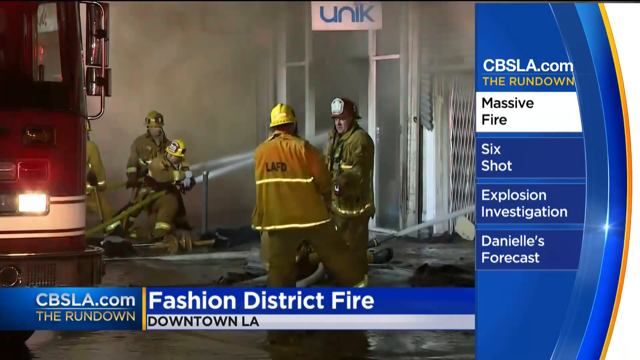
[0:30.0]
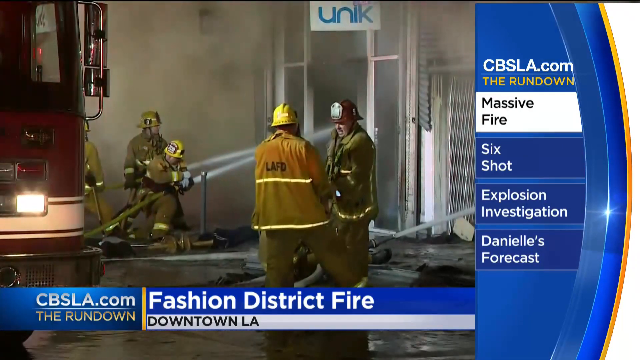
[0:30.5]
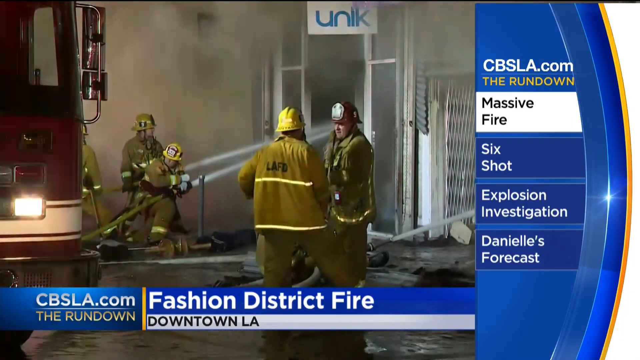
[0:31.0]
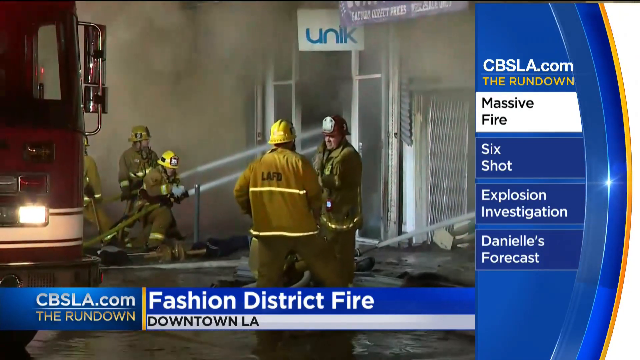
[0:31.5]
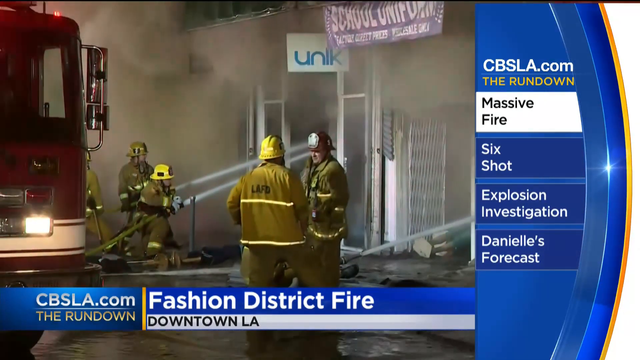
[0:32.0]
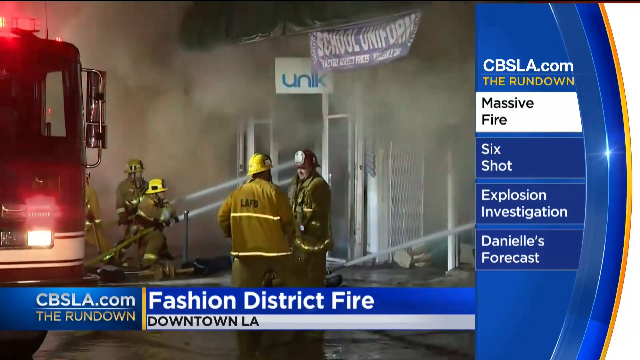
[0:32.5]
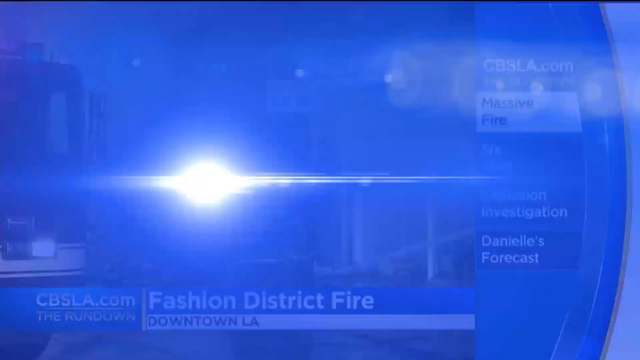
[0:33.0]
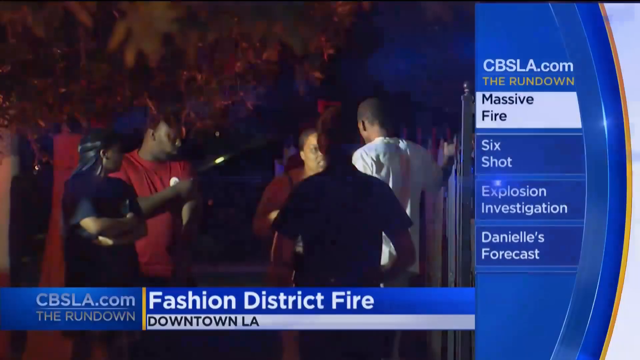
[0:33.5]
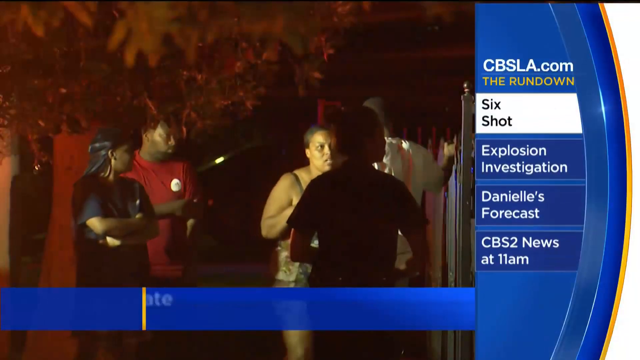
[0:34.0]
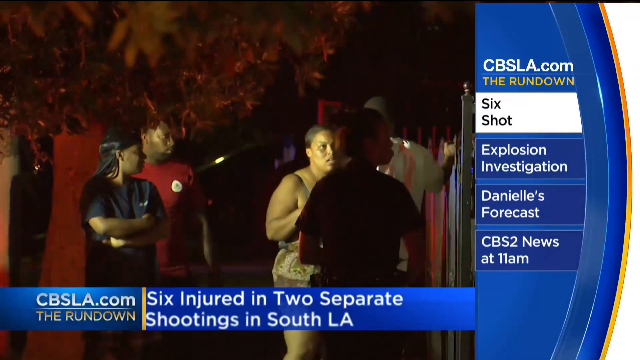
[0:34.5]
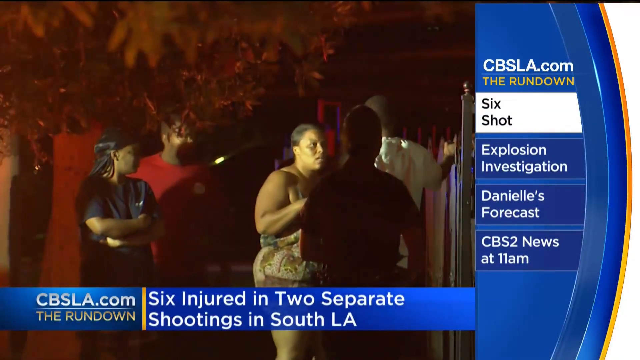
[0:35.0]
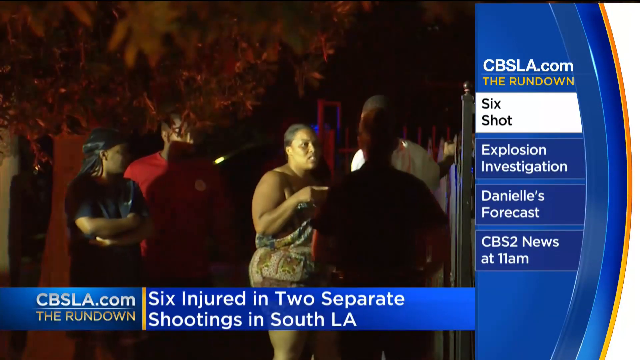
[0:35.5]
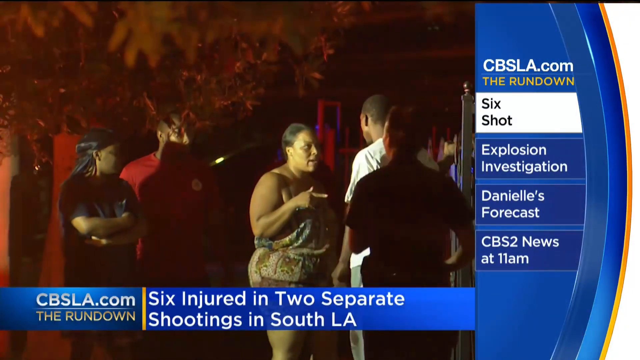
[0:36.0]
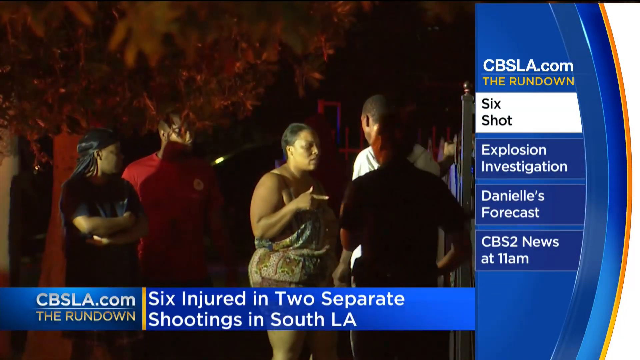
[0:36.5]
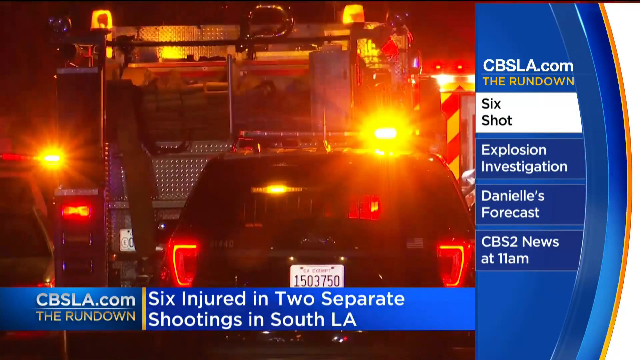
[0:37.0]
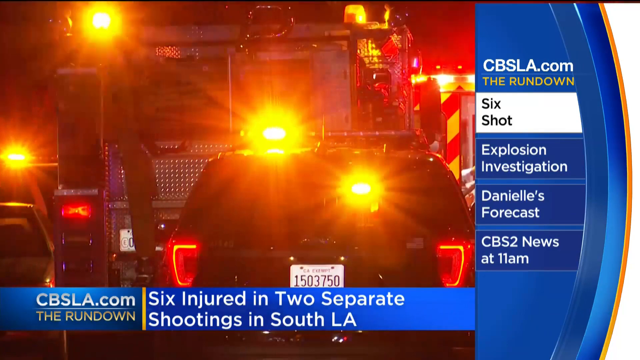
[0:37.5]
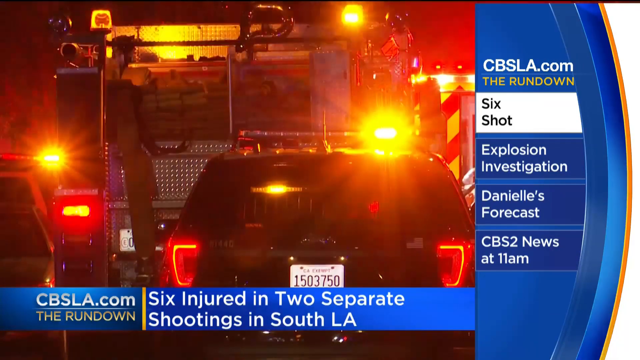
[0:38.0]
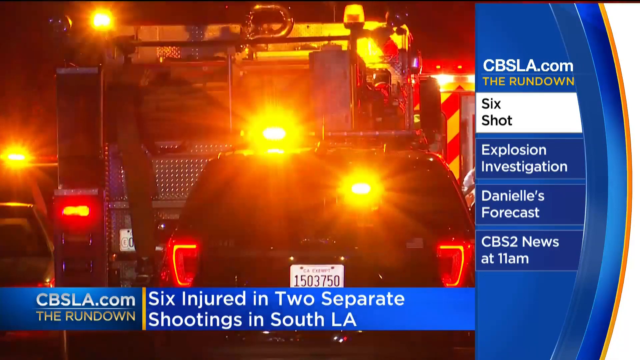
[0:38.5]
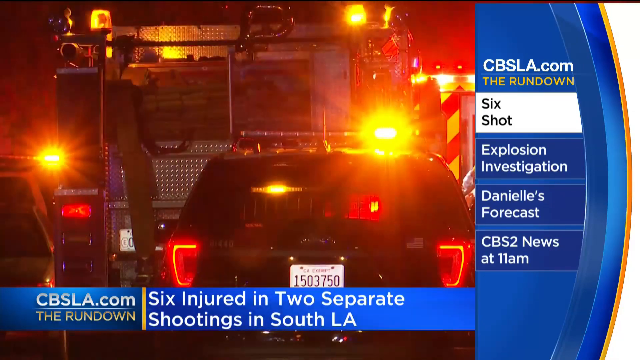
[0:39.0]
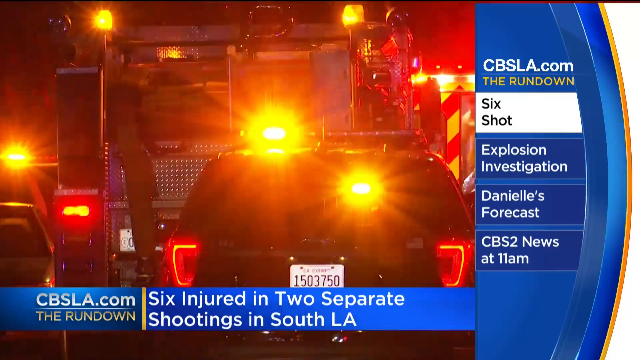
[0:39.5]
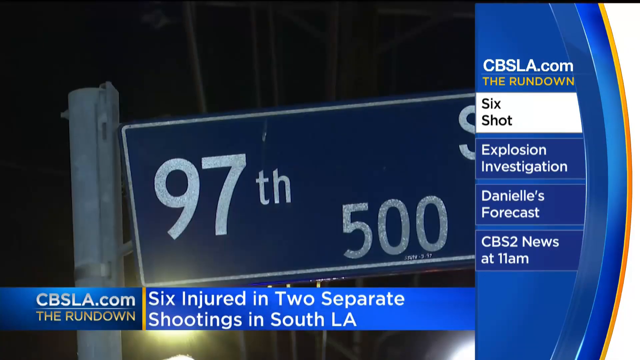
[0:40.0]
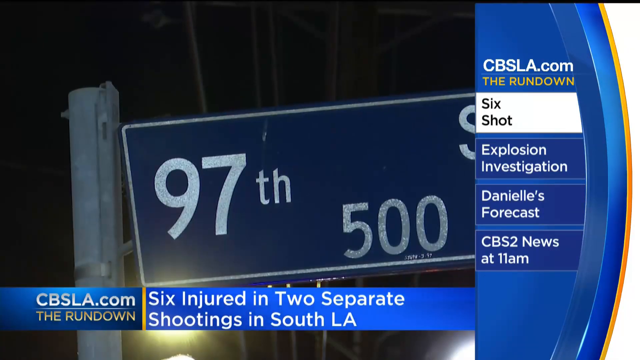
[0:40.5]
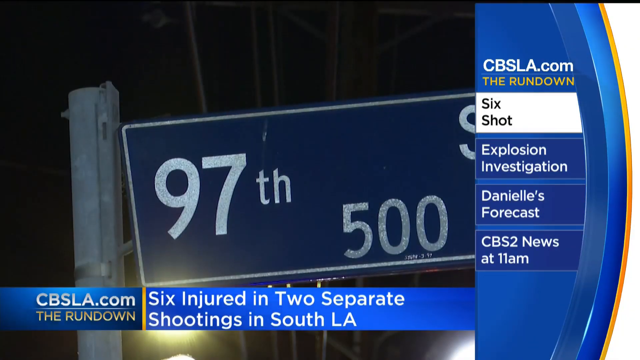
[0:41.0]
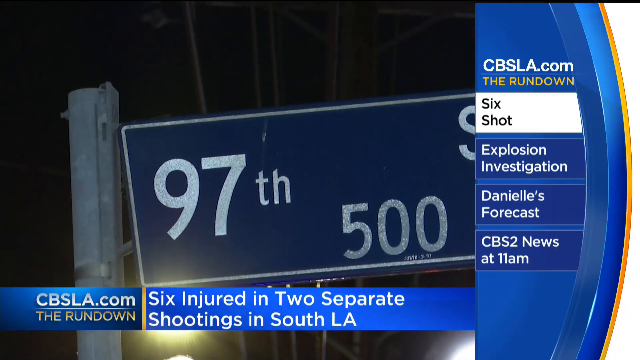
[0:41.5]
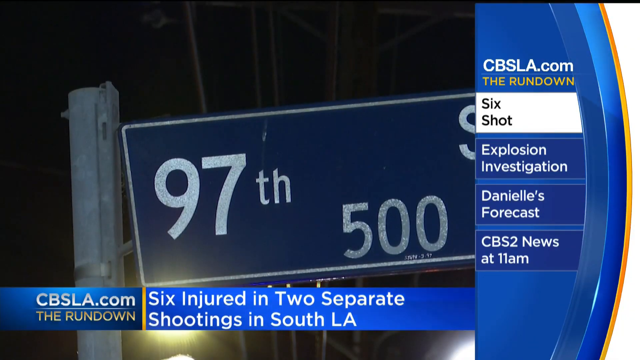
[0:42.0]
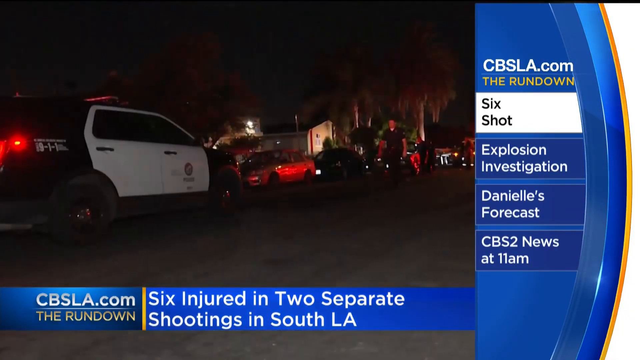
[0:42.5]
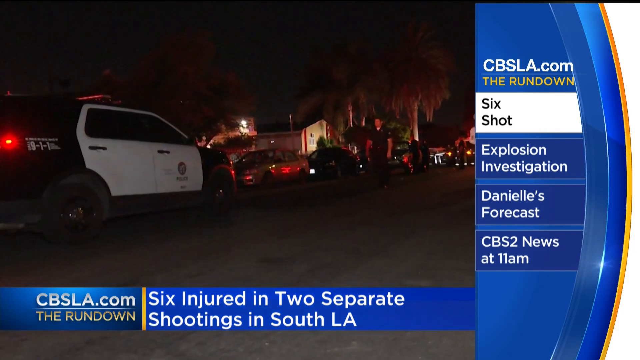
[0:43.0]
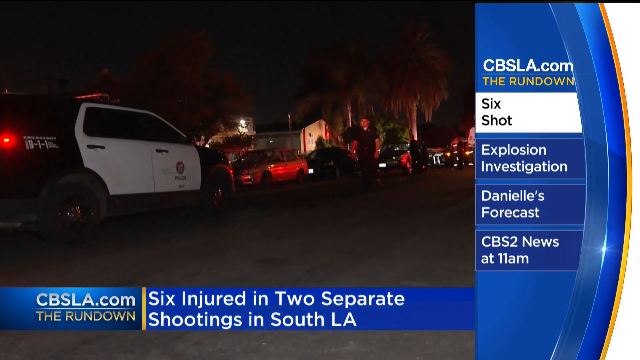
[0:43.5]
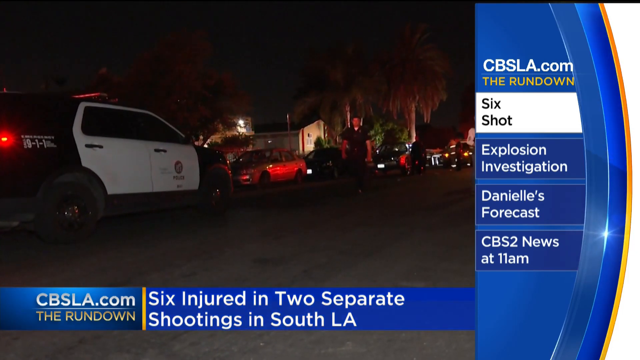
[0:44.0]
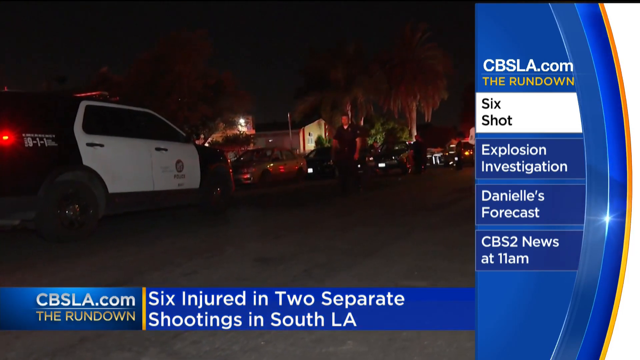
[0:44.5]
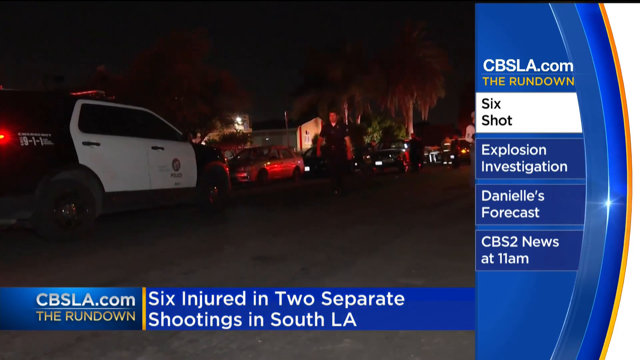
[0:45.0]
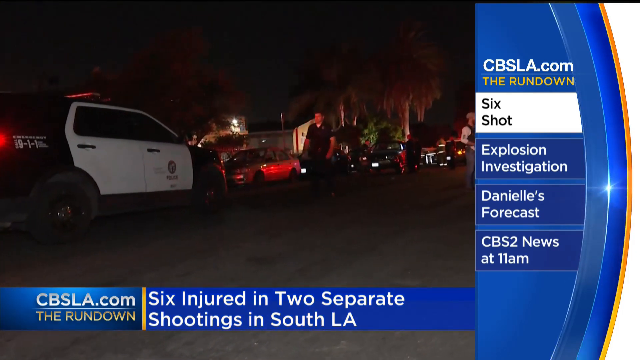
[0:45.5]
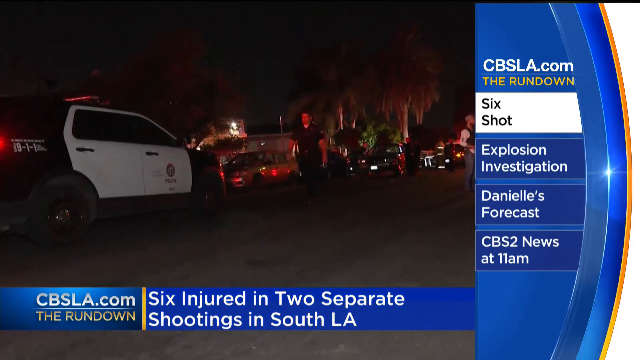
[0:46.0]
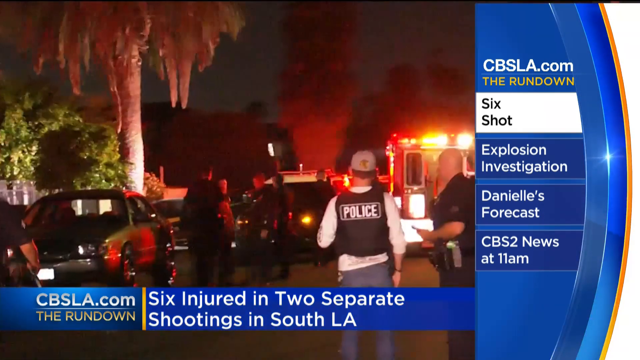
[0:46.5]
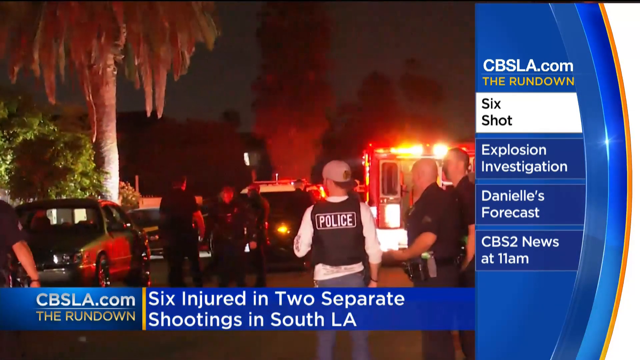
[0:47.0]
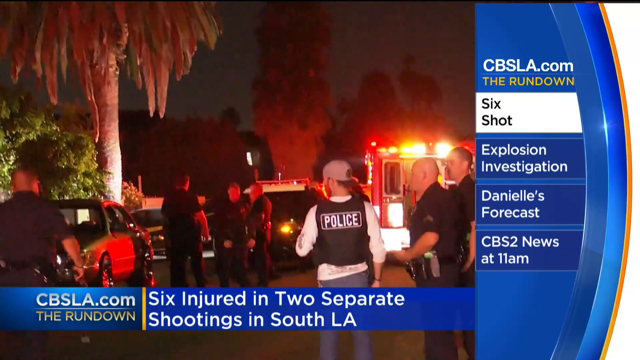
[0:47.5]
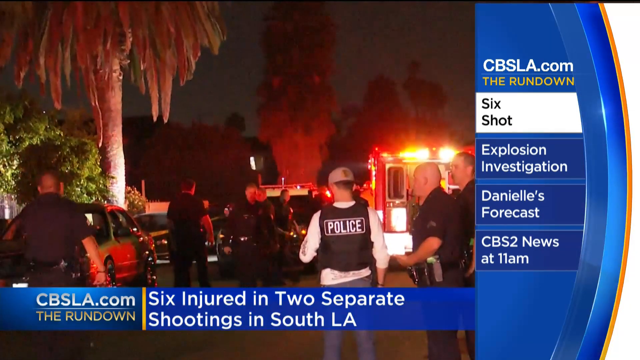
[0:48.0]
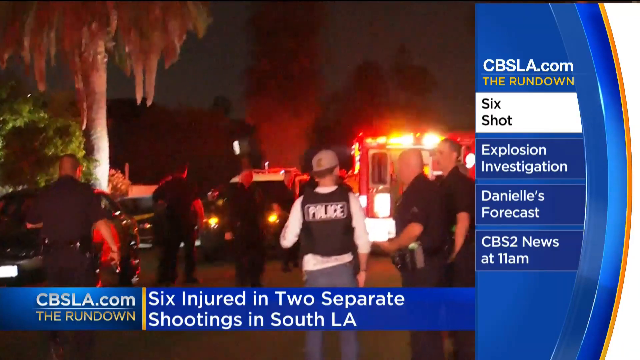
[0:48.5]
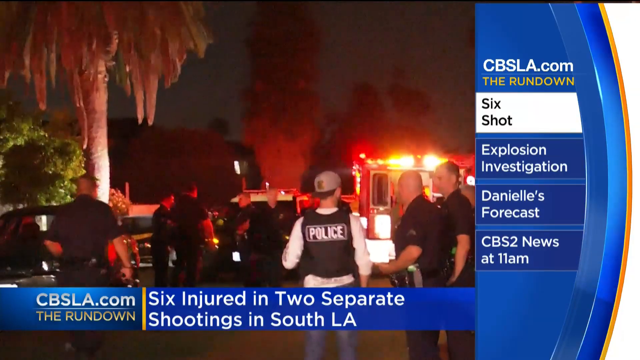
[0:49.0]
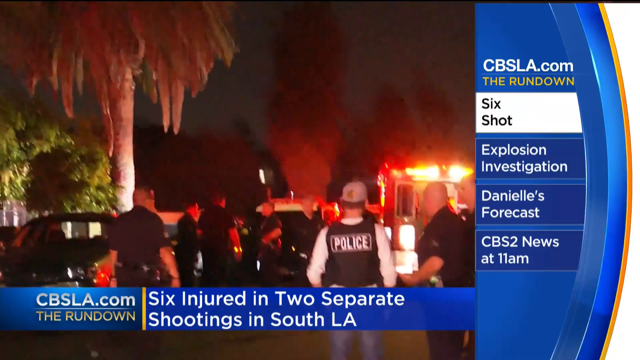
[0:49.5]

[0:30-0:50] A lady appears alongside the headline "six injured in two separate shootings in South LA." Police and ambulances are everywhere at a building. There seem to be firefighters on 97th Avenue, along with ambulances and police everywhere. Lights are flickering and there is lots of movement. A lady is questioning the whole thing; she seems shocked.